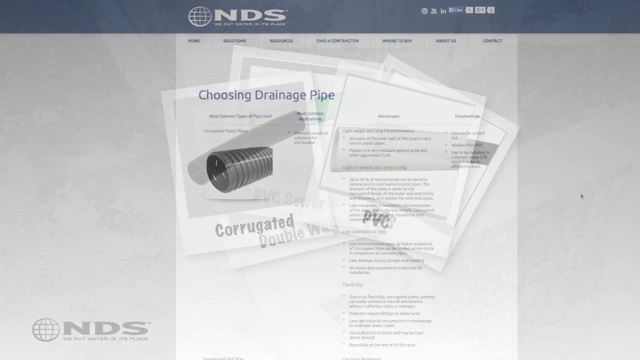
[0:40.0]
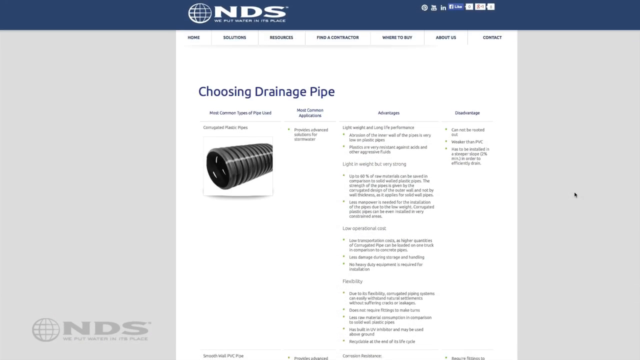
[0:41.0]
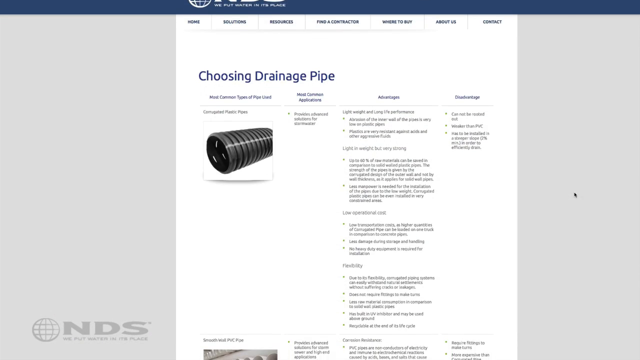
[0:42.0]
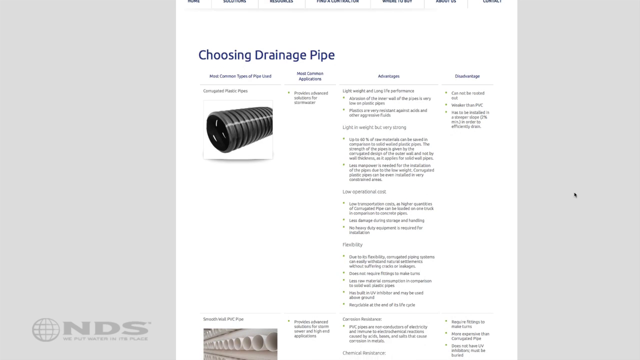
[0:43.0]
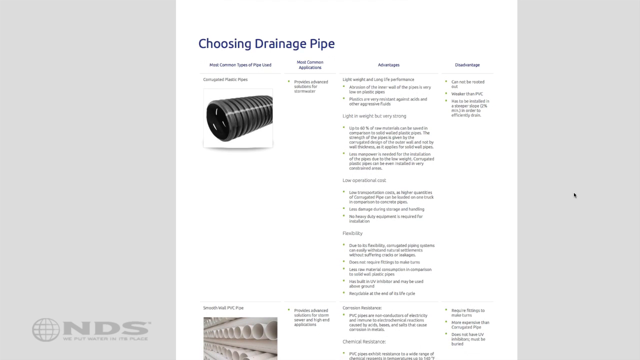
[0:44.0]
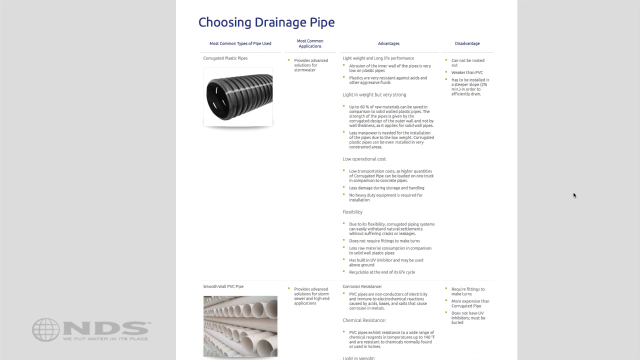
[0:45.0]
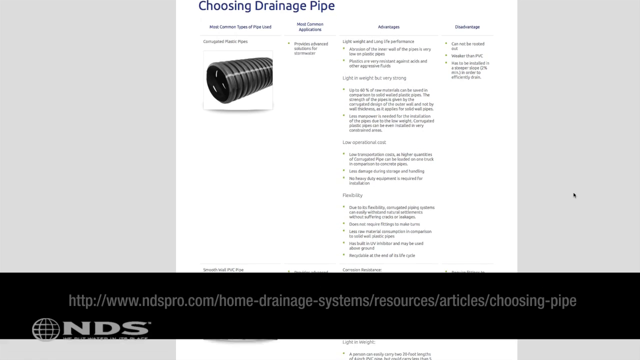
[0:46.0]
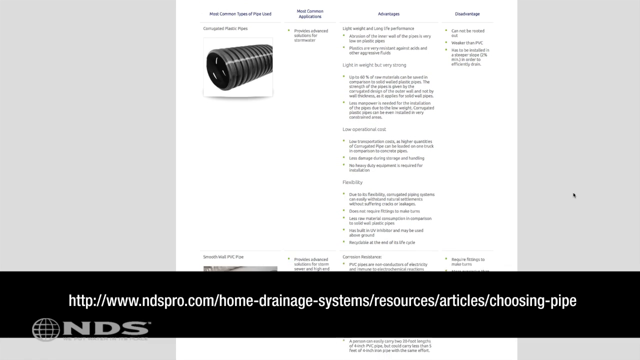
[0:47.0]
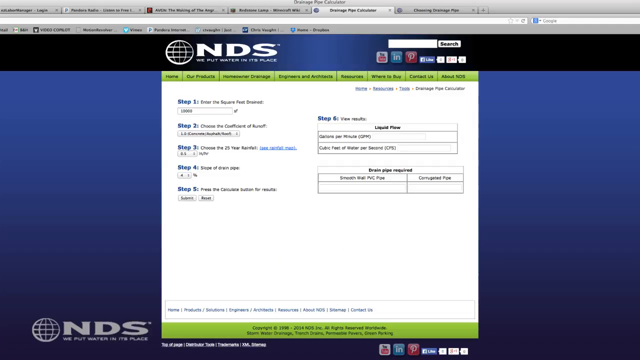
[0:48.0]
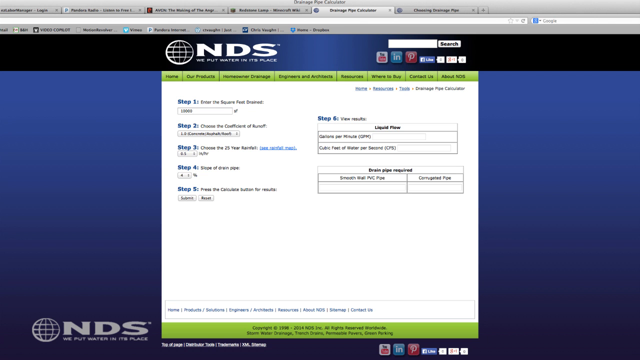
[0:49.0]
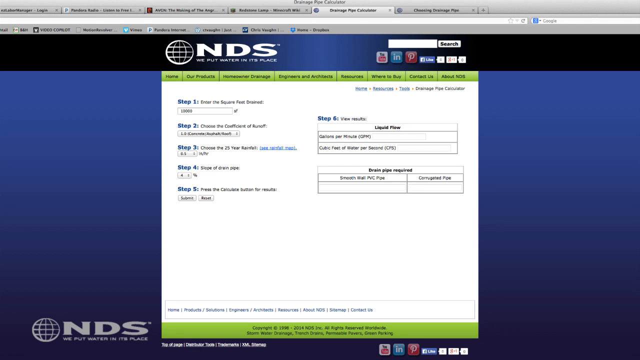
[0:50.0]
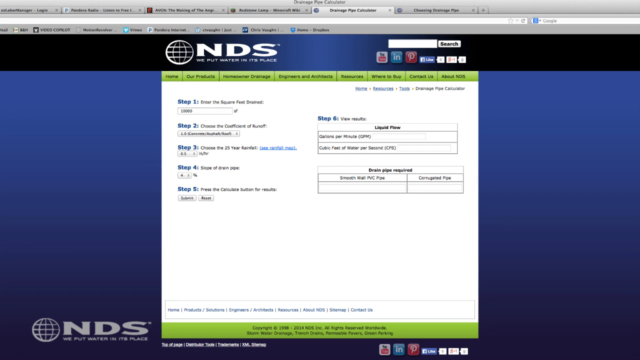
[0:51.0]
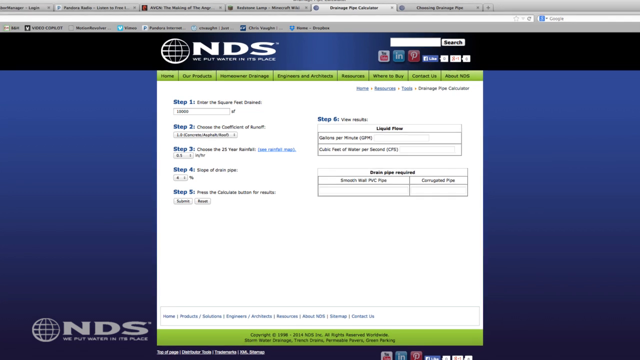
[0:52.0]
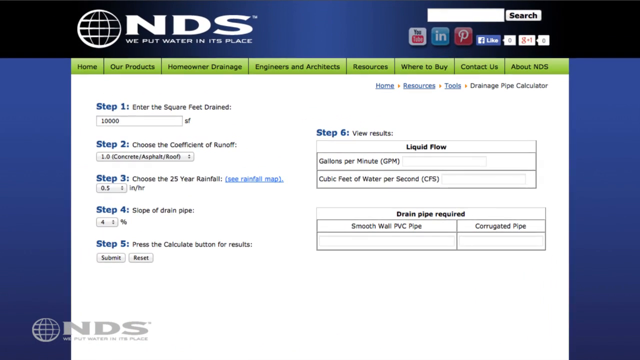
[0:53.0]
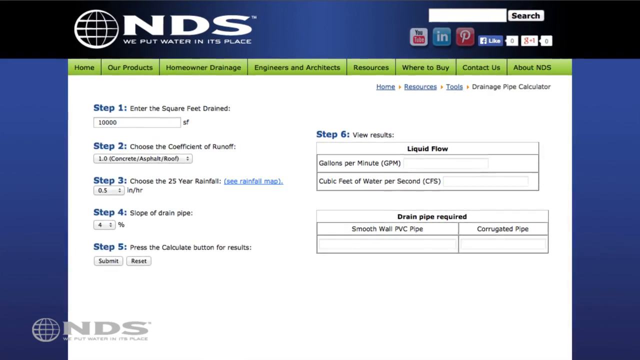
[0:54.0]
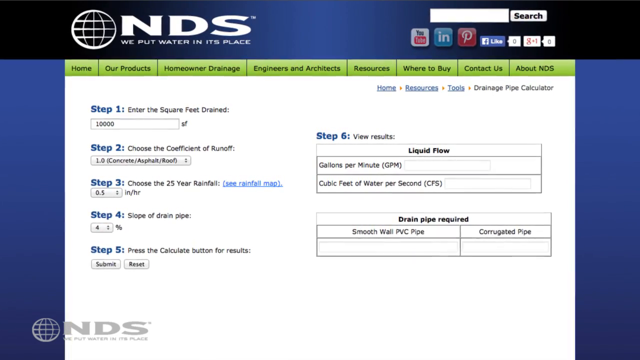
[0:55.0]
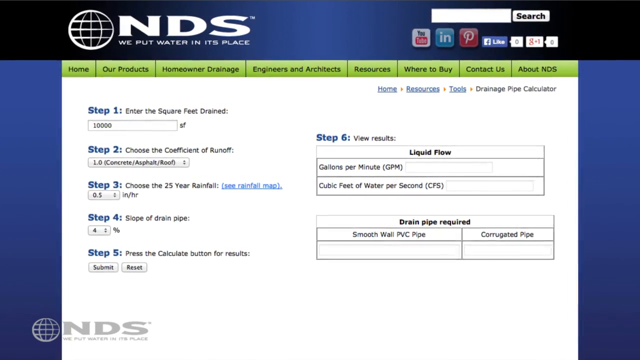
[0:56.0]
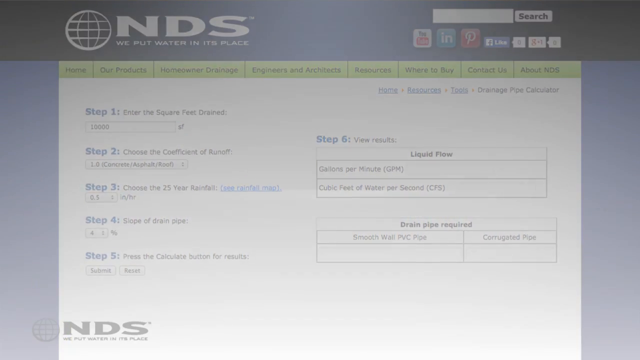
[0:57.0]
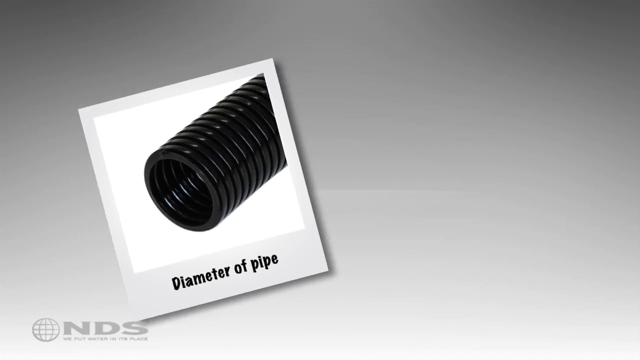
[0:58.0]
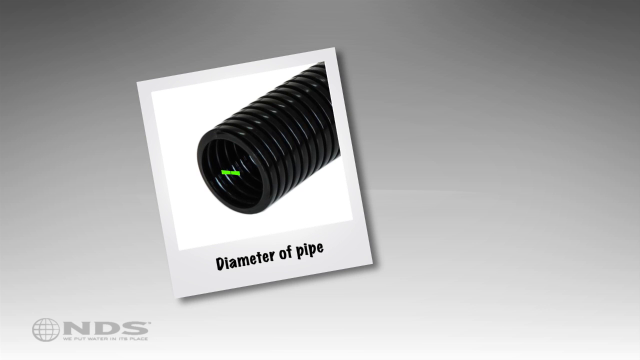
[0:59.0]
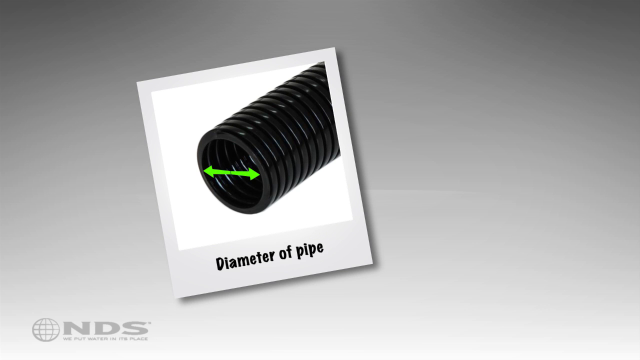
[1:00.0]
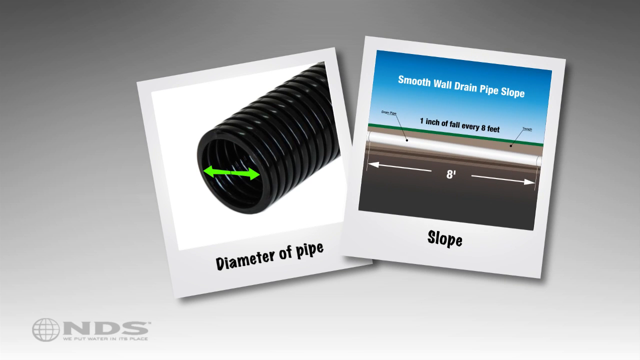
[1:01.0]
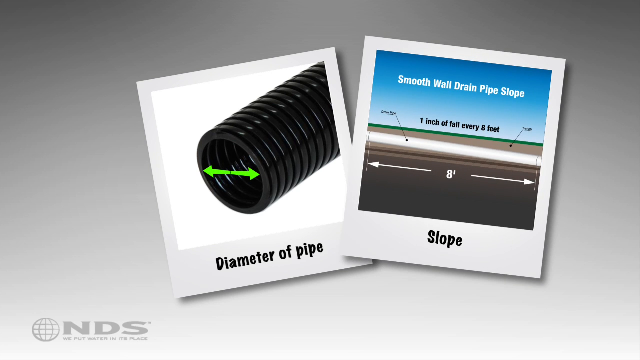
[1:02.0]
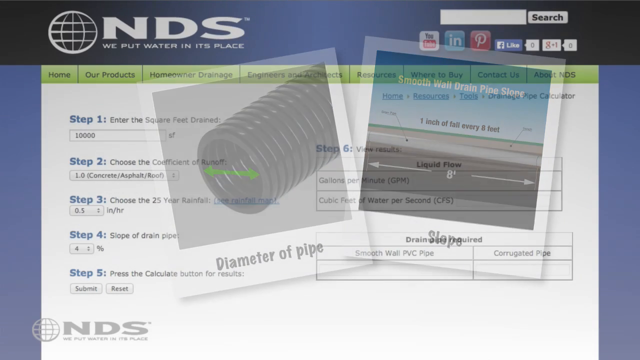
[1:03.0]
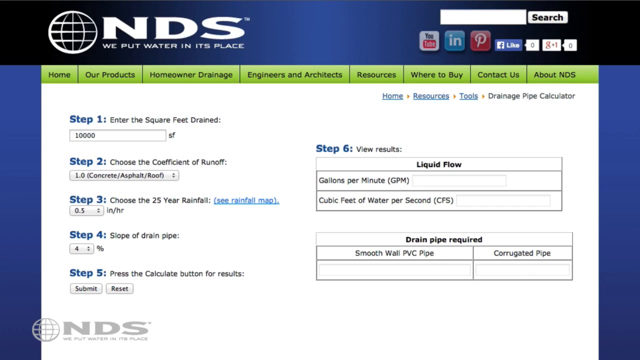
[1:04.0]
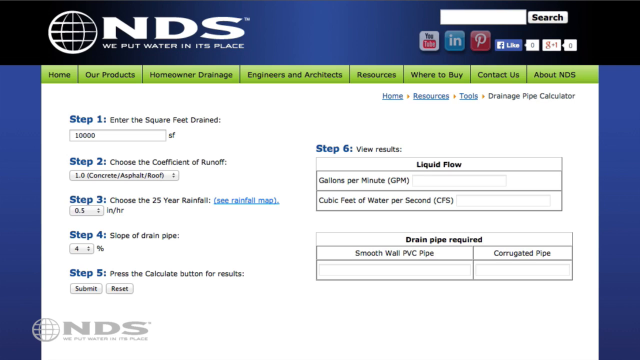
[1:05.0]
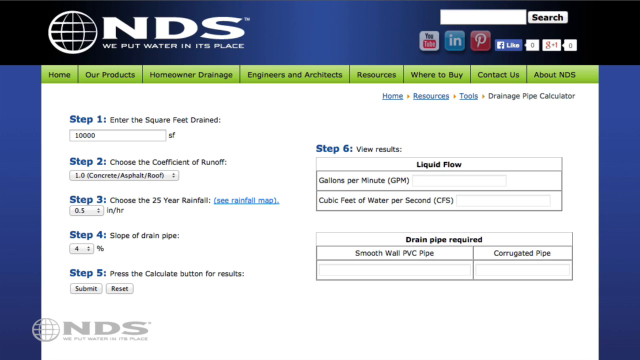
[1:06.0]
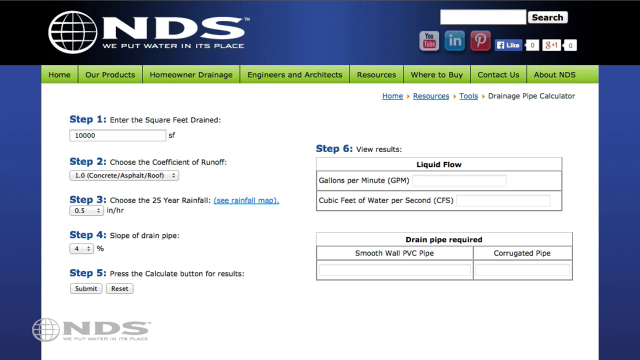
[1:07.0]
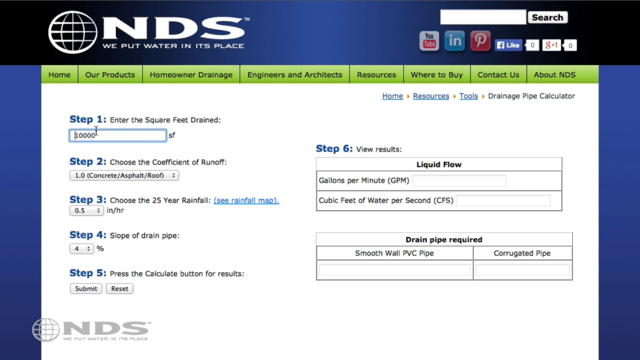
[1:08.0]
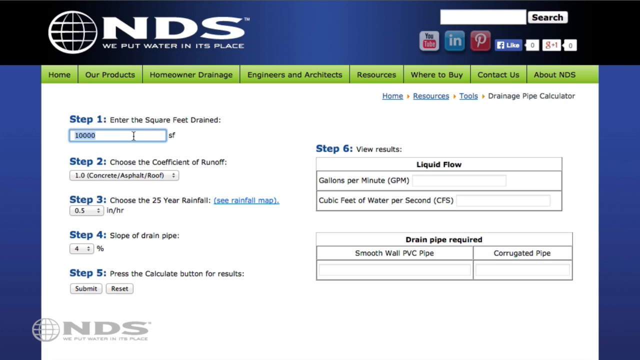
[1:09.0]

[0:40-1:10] The video moves to the NDS website and appears to scroll down a page headed "Choosing Drainage Pipe". As it scrolls toward the bottom of the webpage, a black overlay bar pops up at the bottom showing the URL for this part of the website. The video then shows the computer screen with the website open on a different page; the heading bar says "NDS", and the page appears to be a form with many box fields and drop-down arrows, perhaps an order page, though the text cannot be read in the close-up. Next, the Polaroid picture of the corrugated pipe appears, and a green line starts in the center of the pipe's hole and extends into arrows on either side of the pipe, labeled "diameter of pipe". Another Polaroid-type picture comes in from the right side of the screen, saying "smooth wall drain pipe slope" with "slope" at the bottom. The video returns to the web page, where a cursor moves to select drop-downs to fill in one of the form's fields.